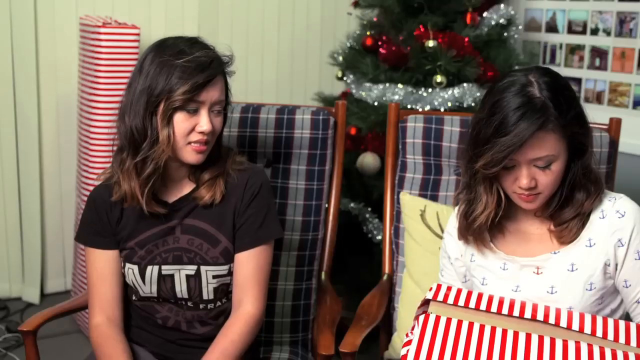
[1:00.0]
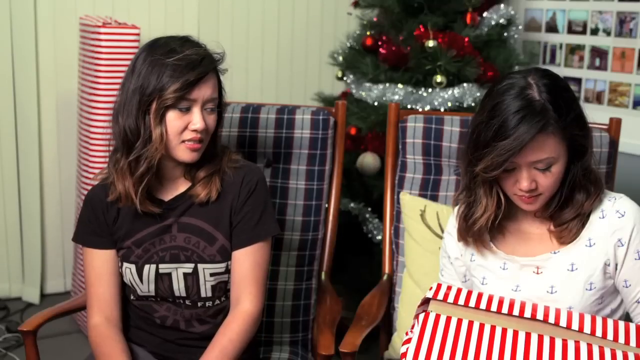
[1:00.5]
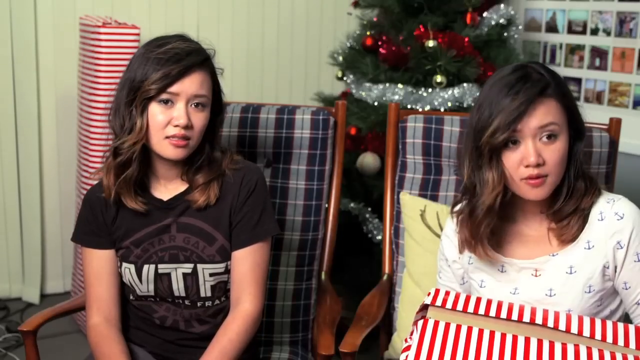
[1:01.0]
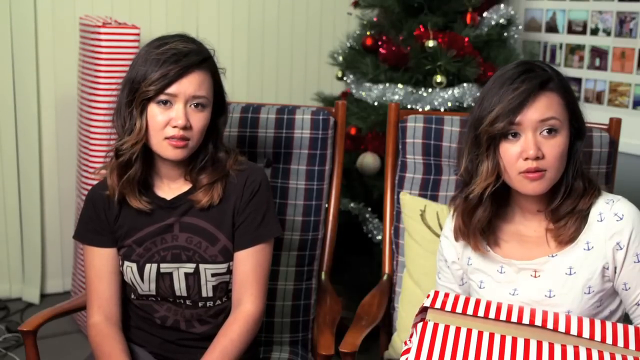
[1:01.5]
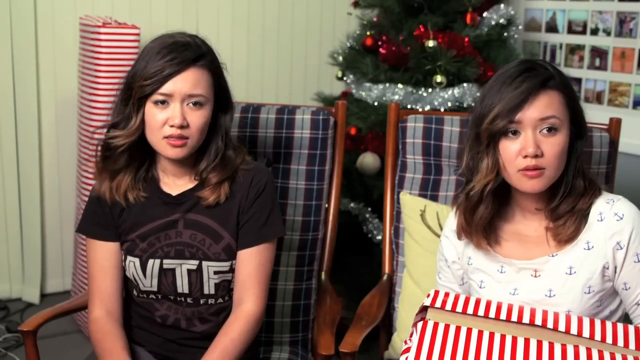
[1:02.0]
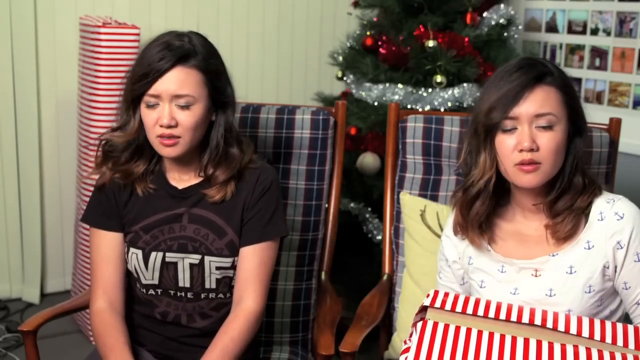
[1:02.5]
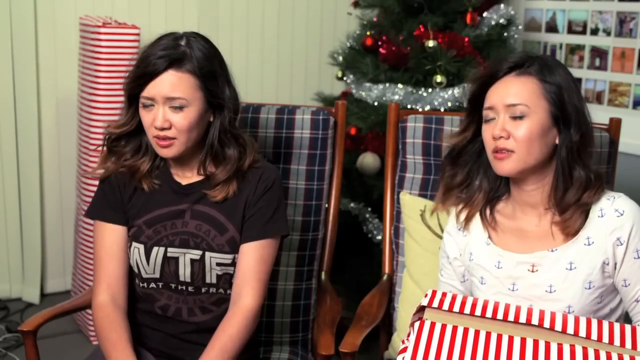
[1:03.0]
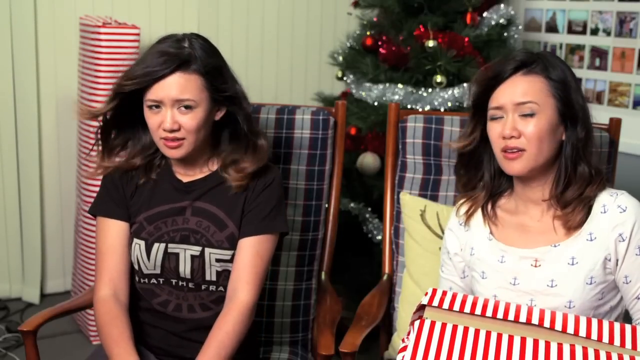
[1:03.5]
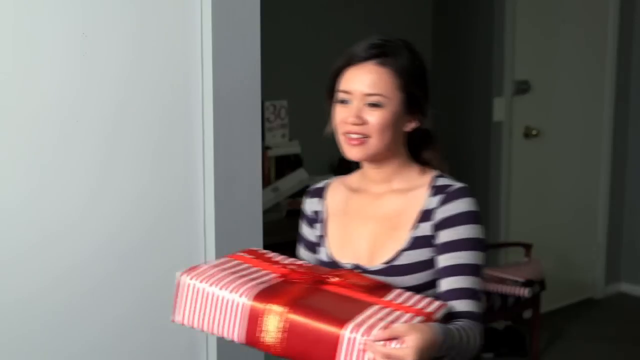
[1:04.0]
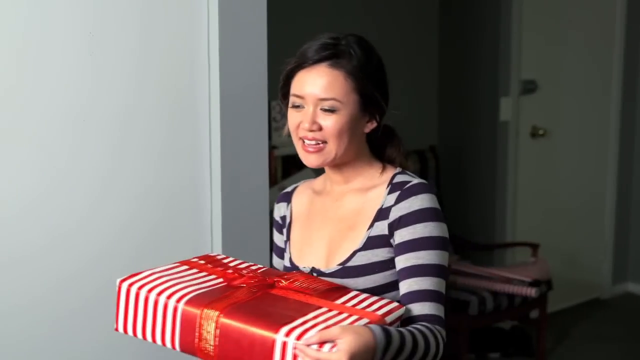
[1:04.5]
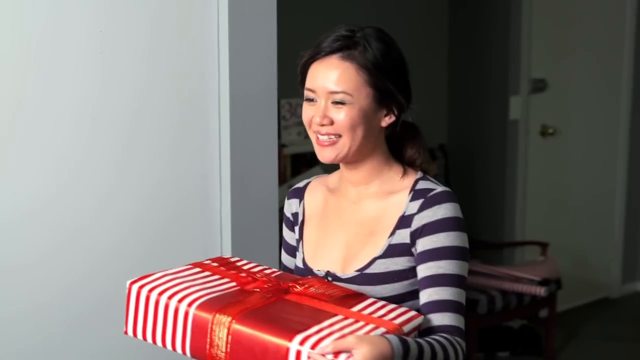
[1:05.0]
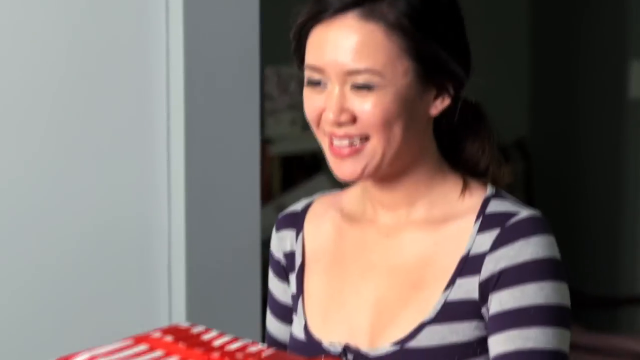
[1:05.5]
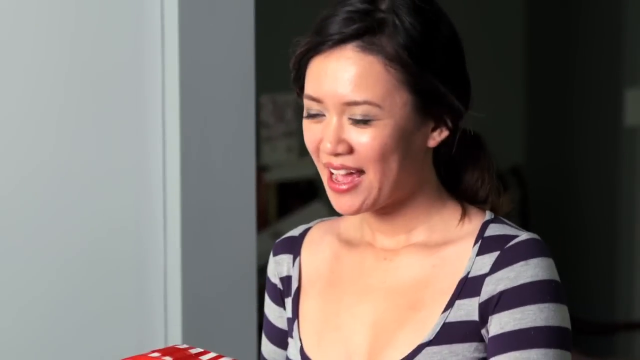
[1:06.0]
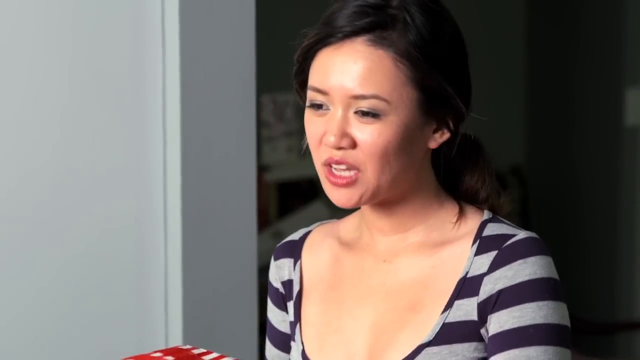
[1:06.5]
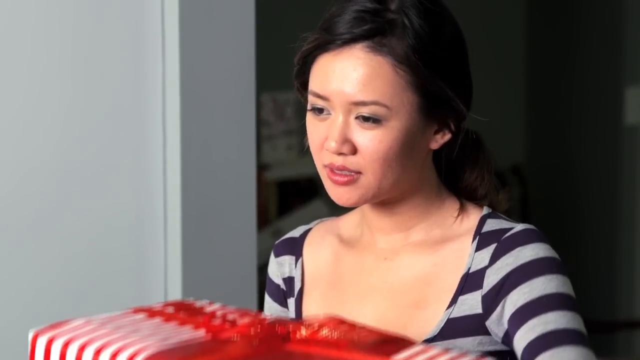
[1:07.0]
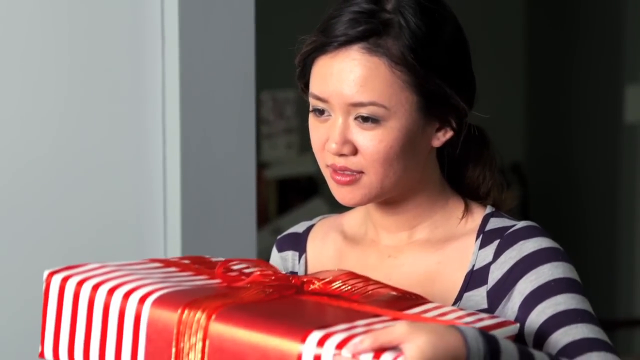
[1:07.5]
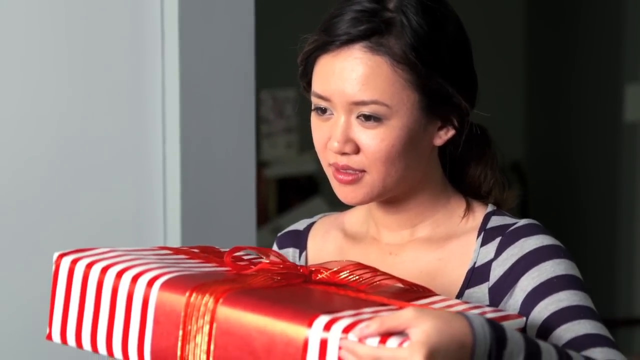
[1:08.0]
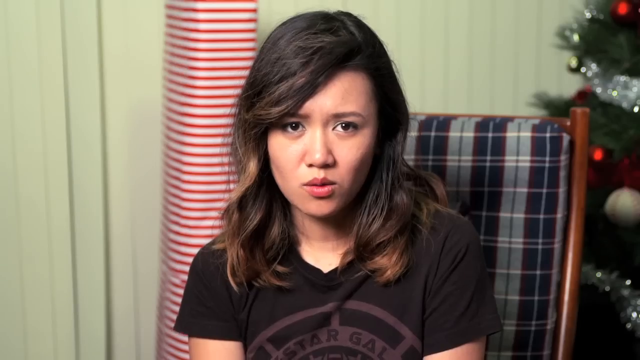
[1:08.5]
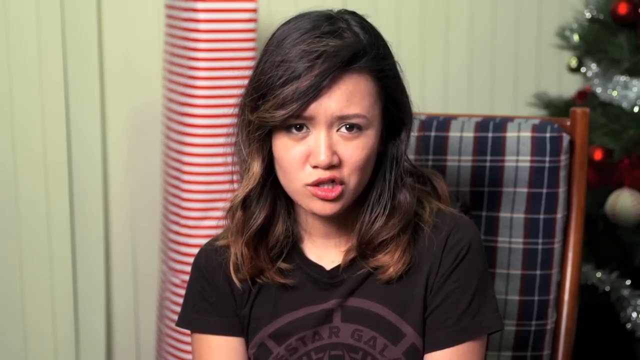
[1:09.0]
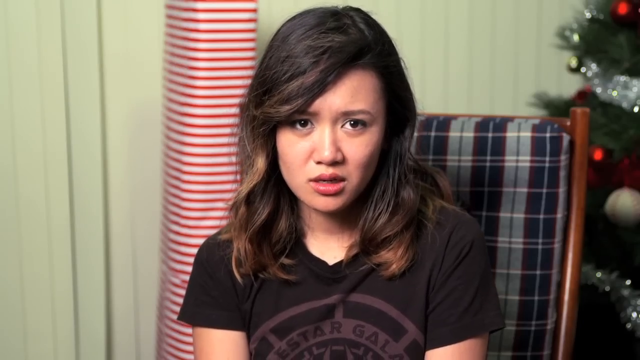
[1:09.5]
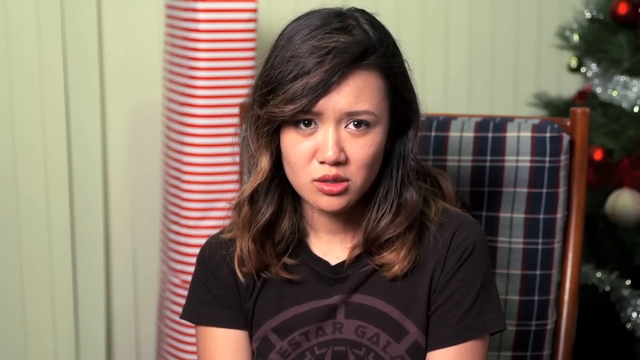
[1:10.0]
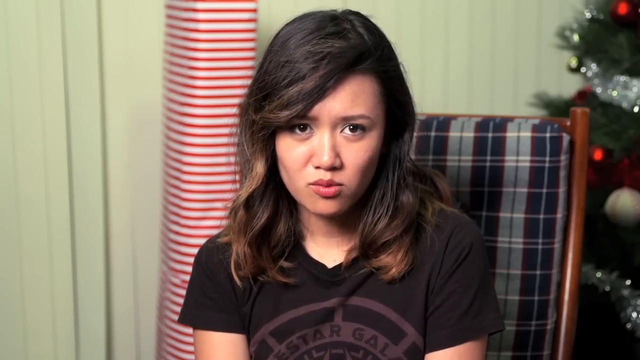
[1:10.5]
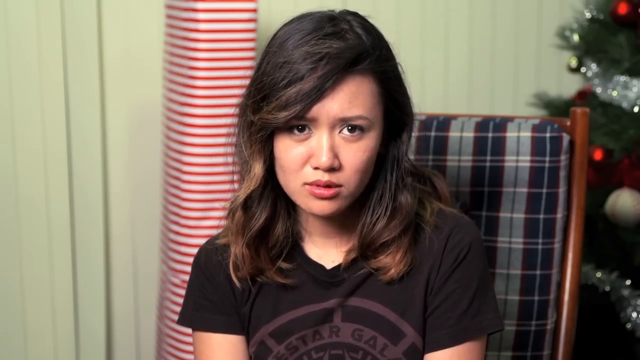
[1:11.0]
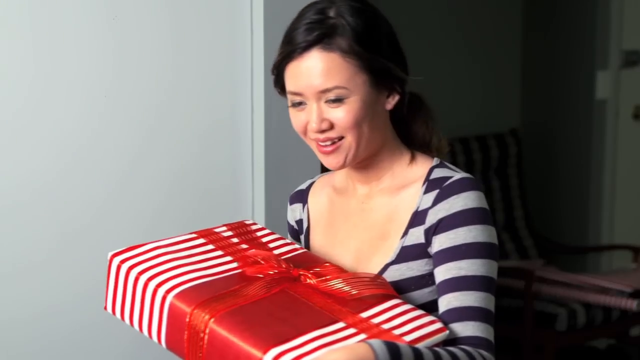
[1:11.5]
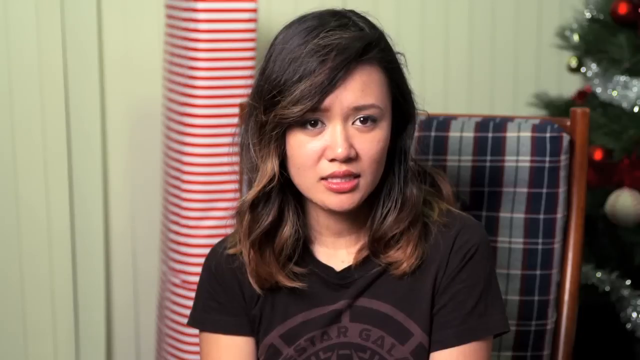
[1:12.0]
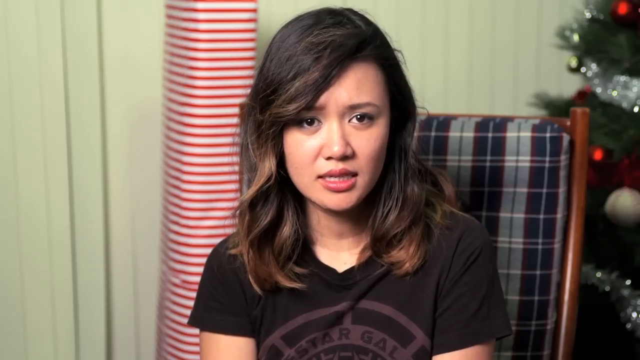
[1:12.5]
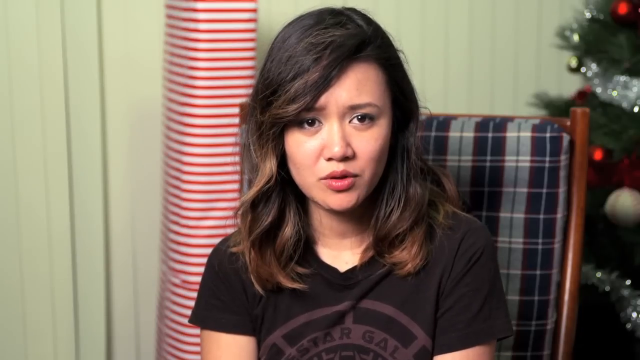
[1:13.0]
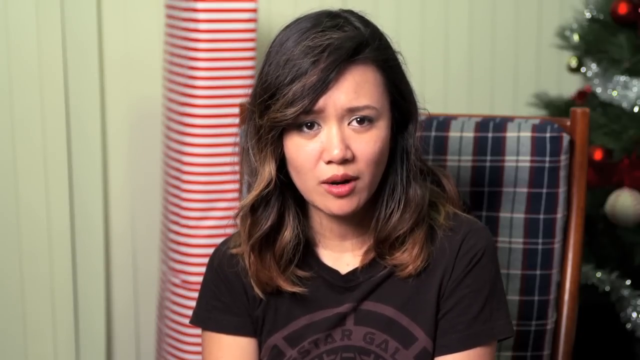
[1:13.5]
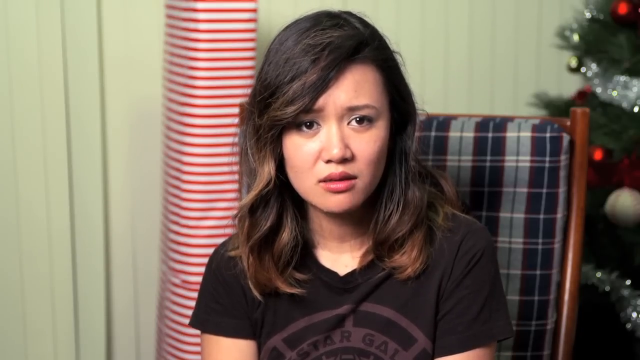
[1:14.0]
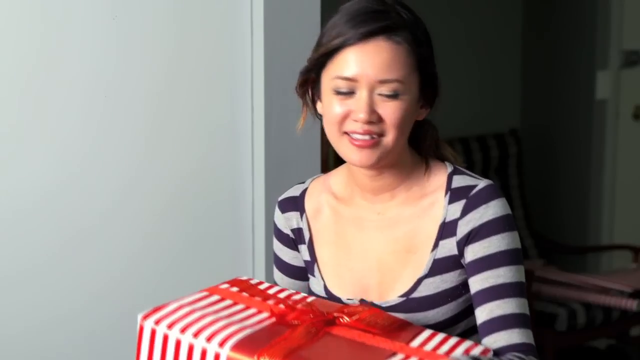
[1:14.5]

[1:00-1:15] The two girls have wind blowing on them, maybe from a fan. Another girl comes in with a package while the first girl says something, and the shots cut back and forth between the first girl and the girl holding the package. The girl coming in wears a striped black and gray shirt. Her package is also in red and white striped wrapping paper, with a big red chunk in the middle and a bow across it. She comes in the door with a big smile, holding the package, and kind of stands in the doorway holding it up while the other girl says something to her. The girl seems to laugh, though it is hard to tell. Her hair is tied back in a ponytail. The wind blows in the two girls' faces again, and the shots keep cutting between the first girl talking and the girl holding the package.